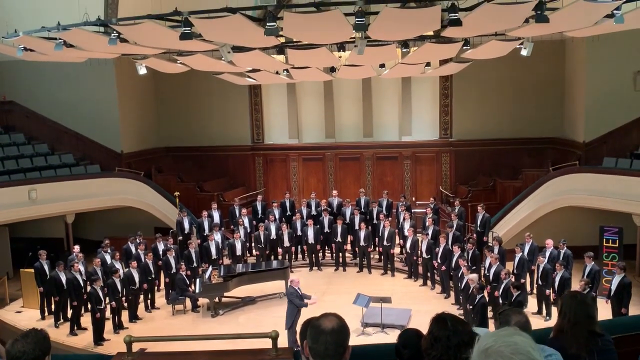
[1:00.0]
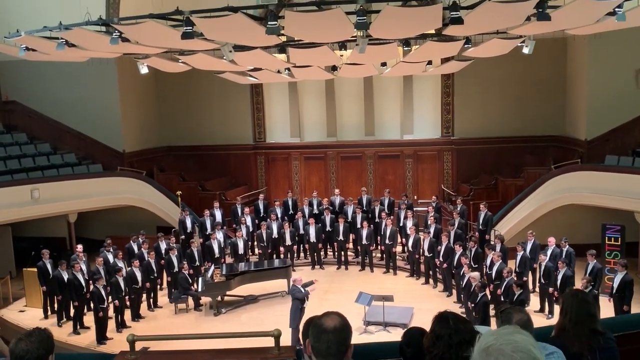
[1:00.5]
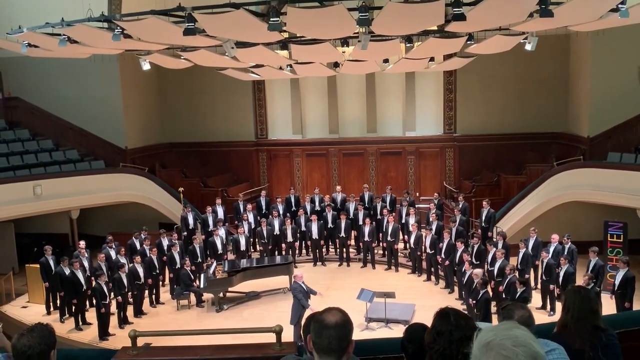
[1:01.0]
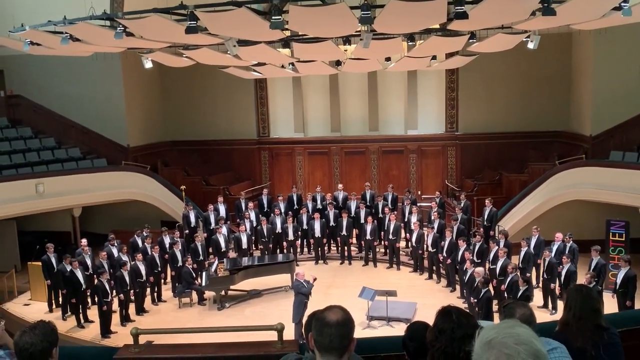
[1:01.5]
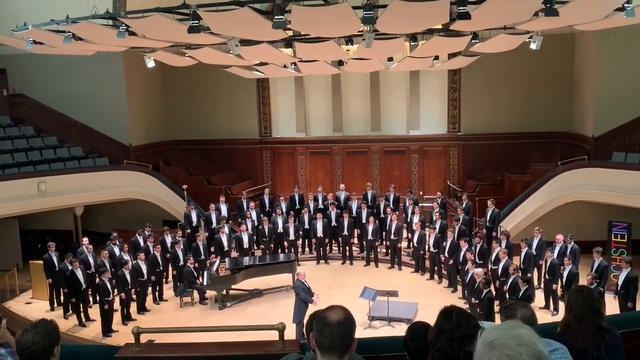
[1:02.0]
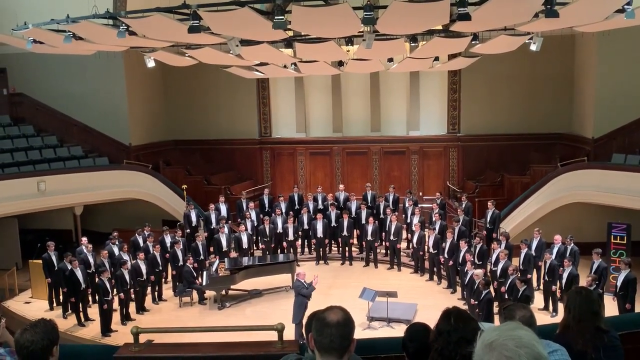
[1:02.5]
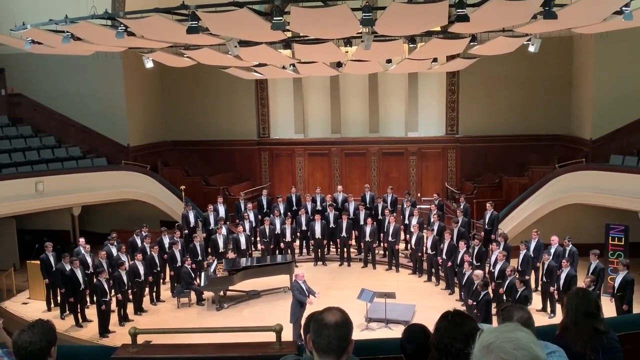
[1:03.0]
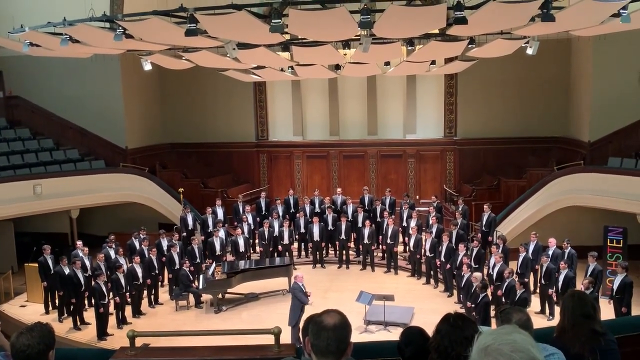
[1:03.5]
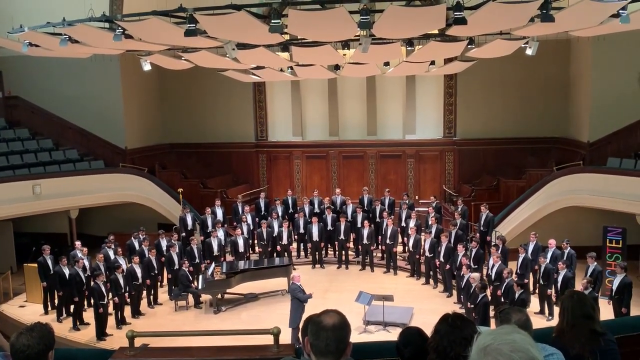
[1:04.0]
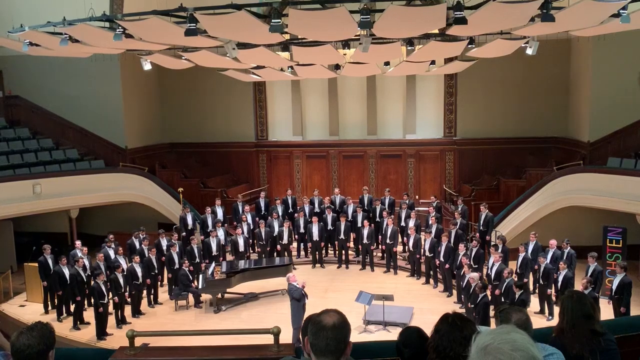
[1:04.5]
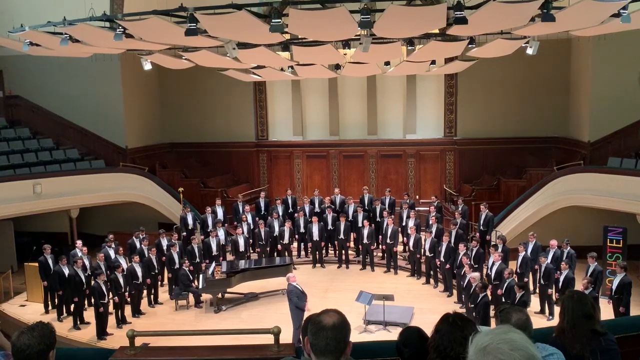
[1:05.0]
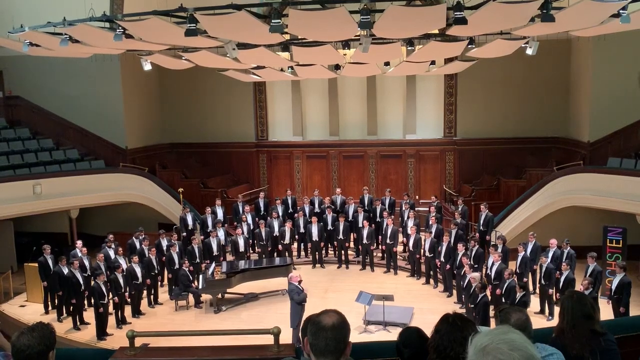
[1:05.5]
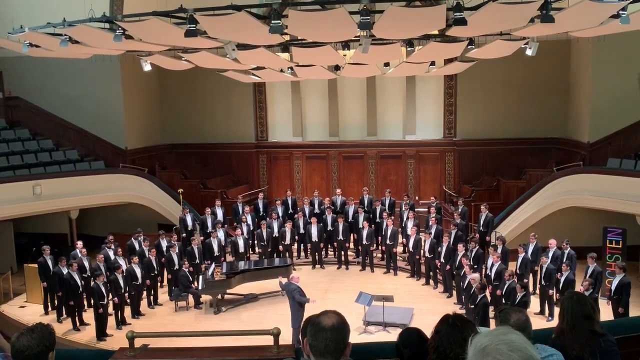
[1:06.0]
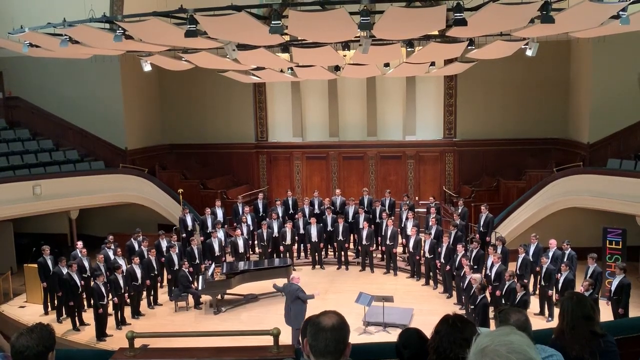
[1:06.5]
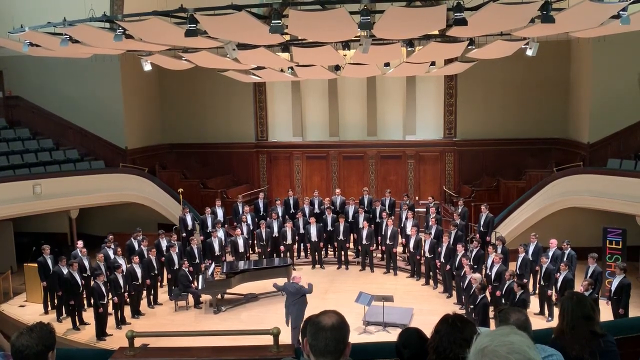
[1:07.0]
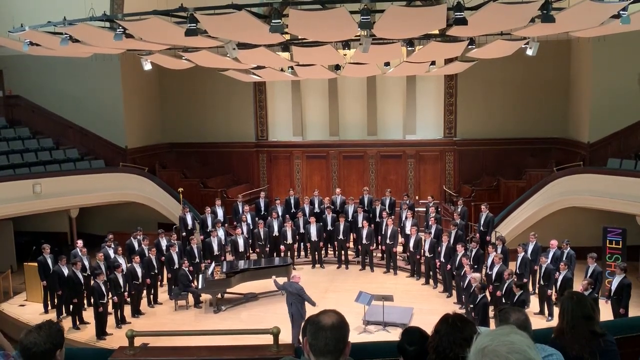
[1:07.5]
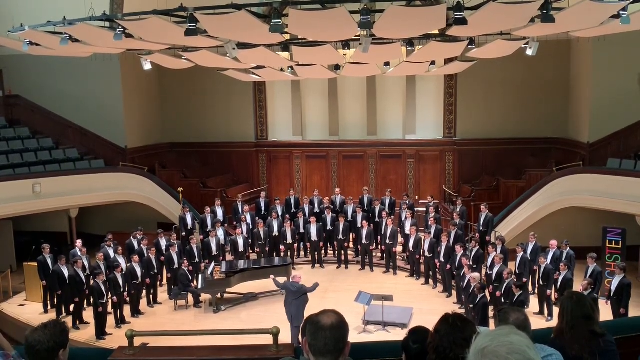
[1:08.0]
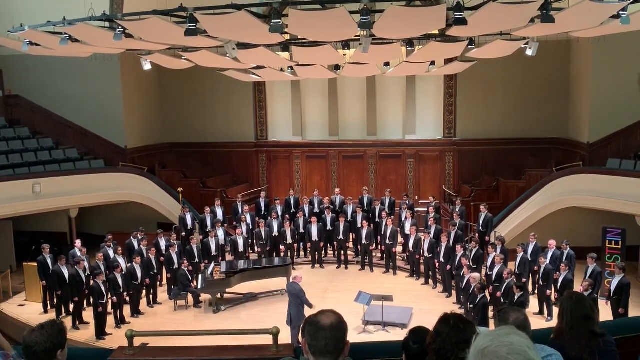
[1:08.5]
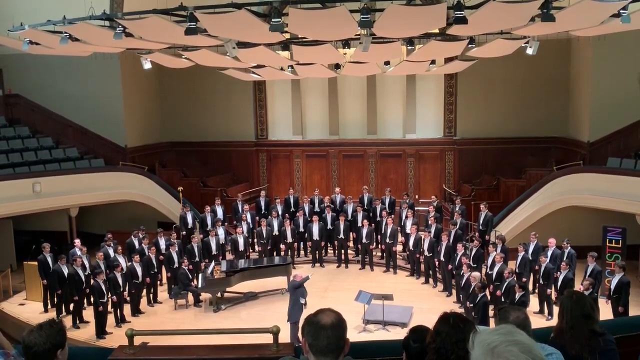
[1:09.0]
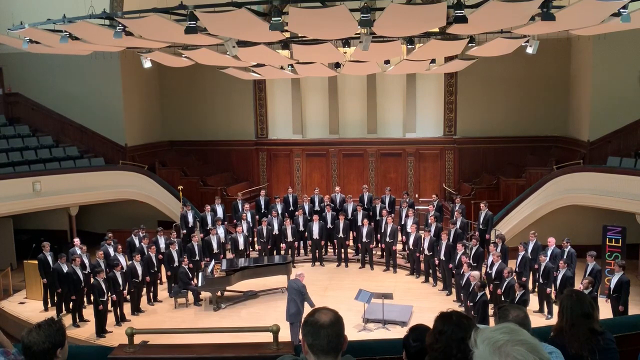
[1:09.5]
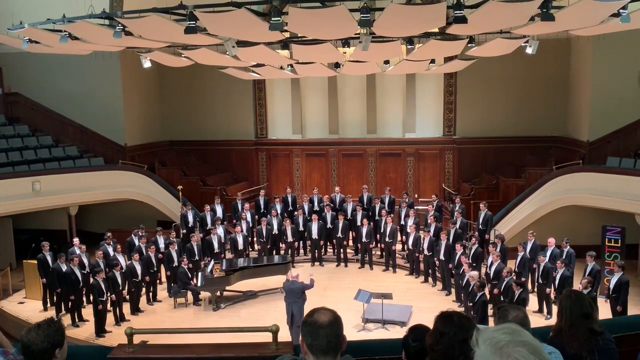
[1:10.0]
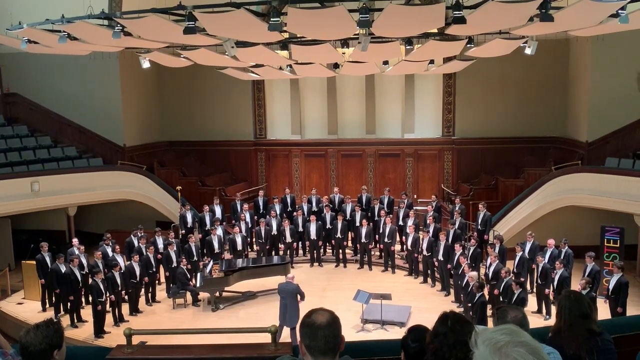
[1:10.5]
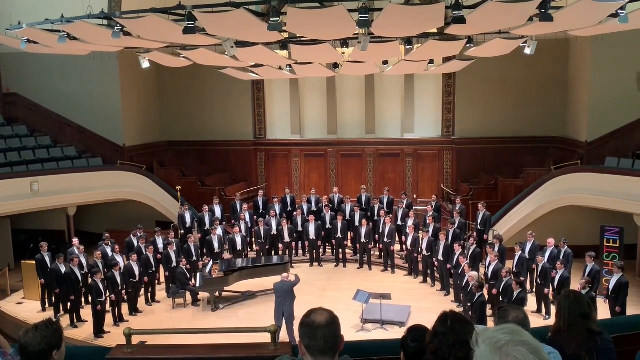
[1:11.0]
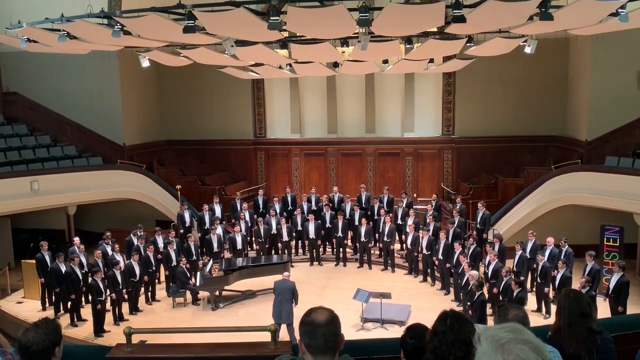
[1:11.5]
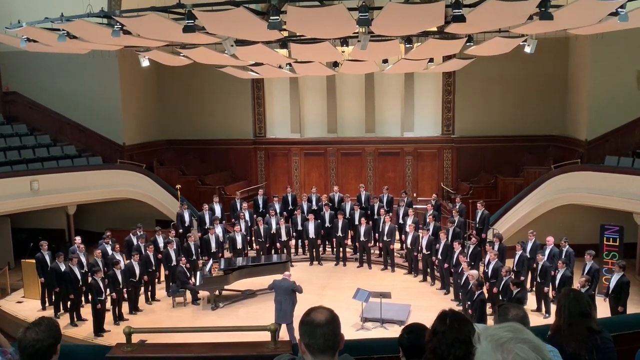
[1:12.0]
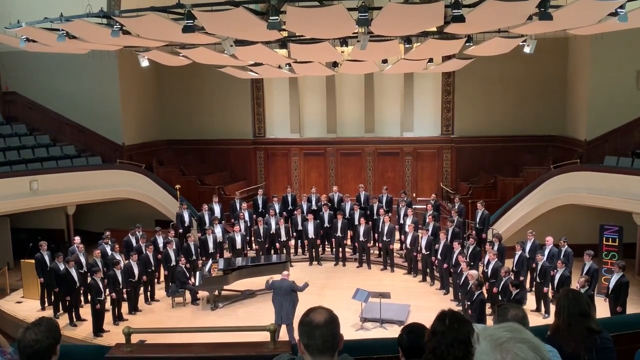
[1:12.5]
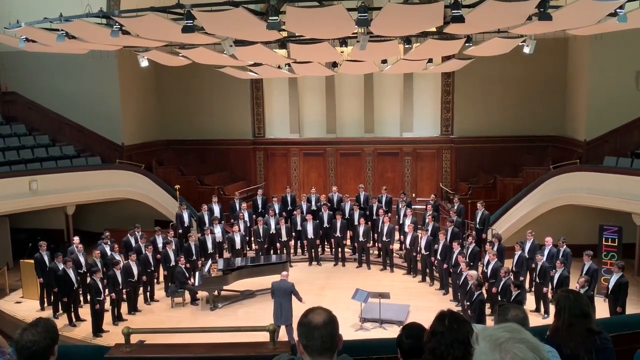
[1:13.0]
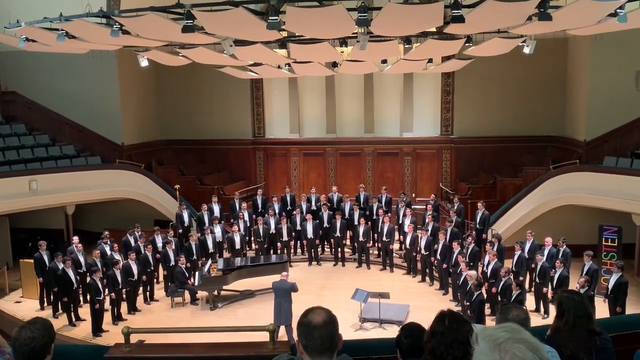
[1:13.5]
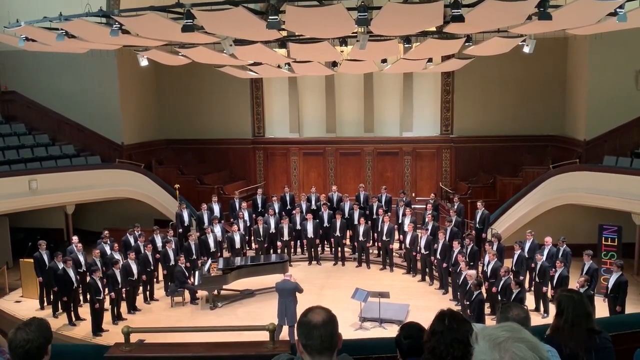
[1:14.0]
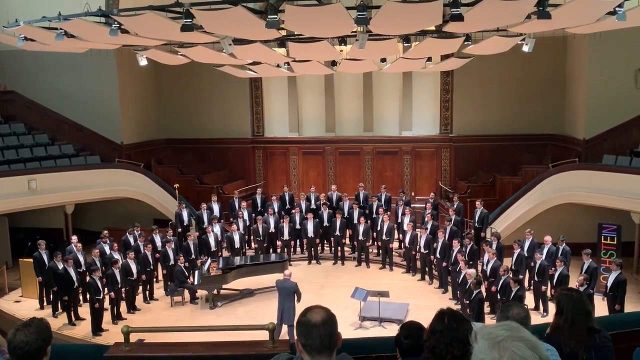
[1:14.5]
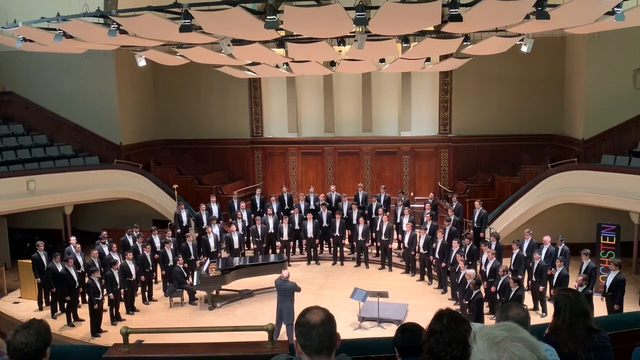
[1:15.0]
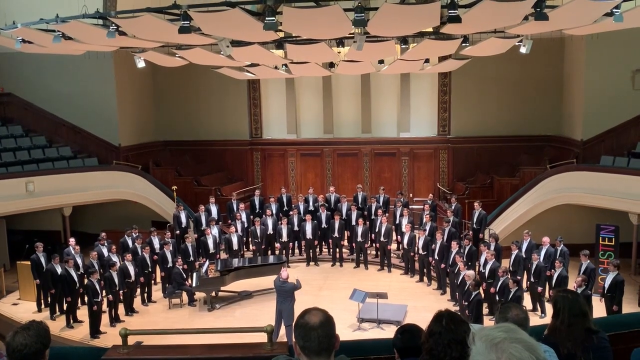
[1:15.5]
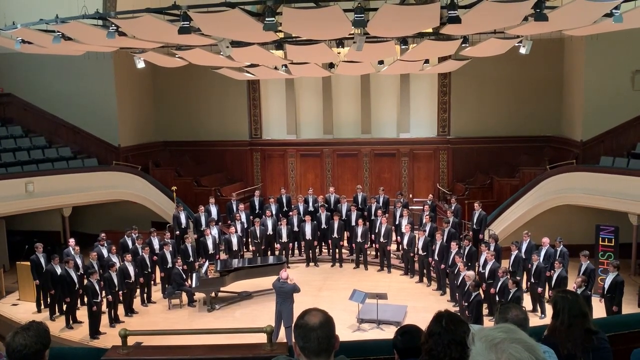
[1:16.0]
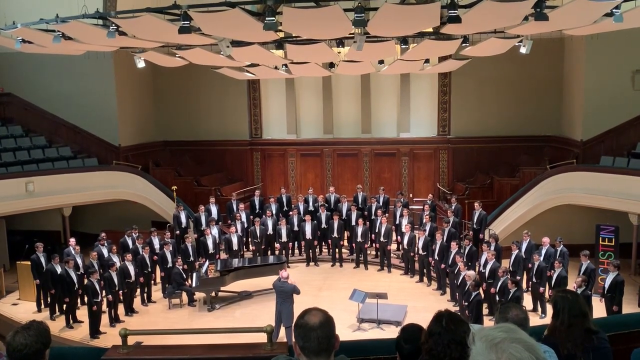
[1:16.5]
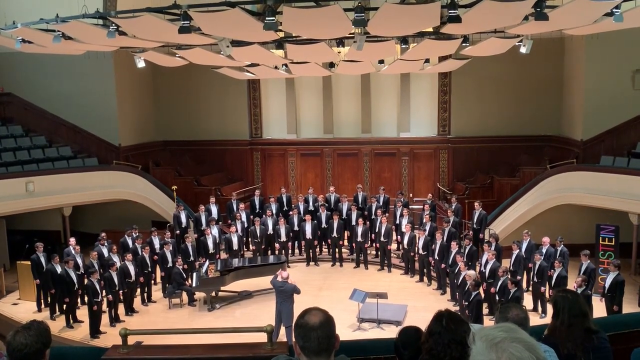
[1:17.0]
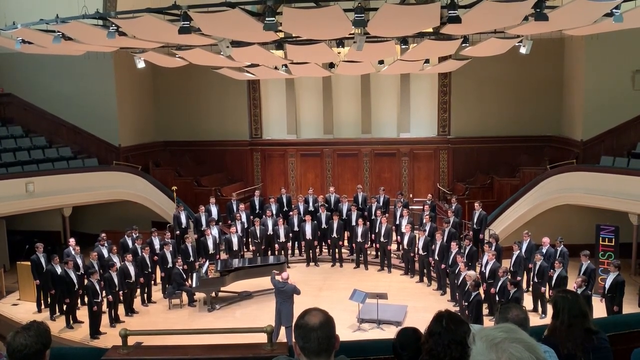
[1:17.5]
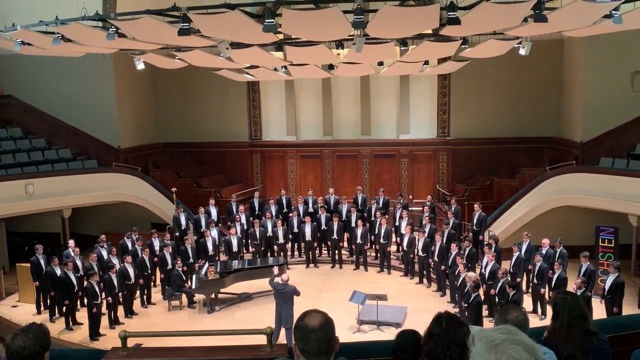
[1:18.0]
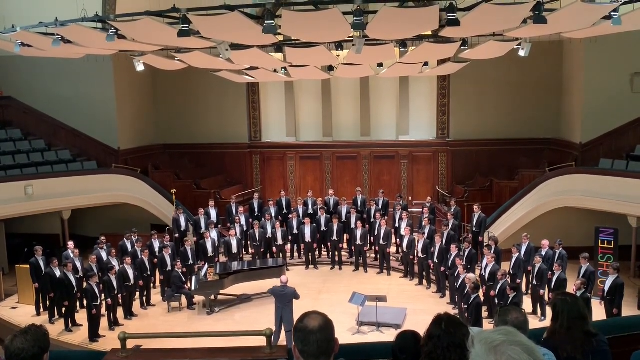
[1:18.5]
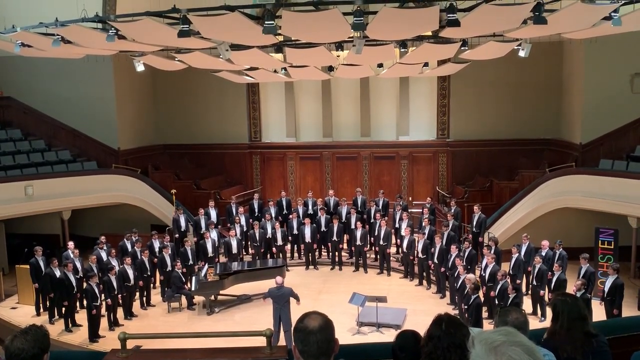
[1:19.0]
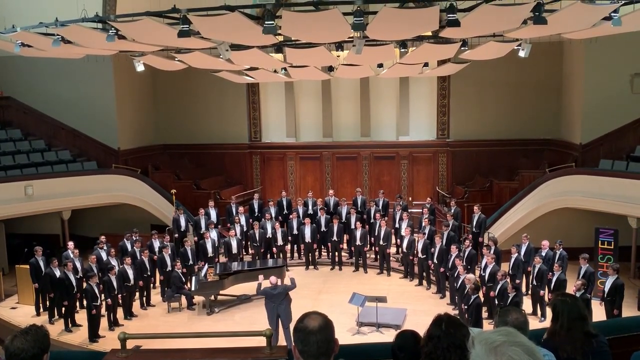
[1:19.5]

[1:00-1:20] The conductor, in the center of the stage, is turned to fully face the singers on the right side of the stage, his back to the singers on the left side. He moves his arms and even leans back at one point as he conducts the singers in front of him on the right. He then reaches behind him to direct the singers on the left side of the stage to come in, without turning to look at them: he keeps looking at the singers on the right and conducting them with his right arm while using his outstretched left arm to bring in the singers on the left. He then moves his left hand more quickly. He turns back to the singers on the right side of the stage with both arms, then turns his body to the center to conduct the whole group equally, moving both arms in grand gestures.